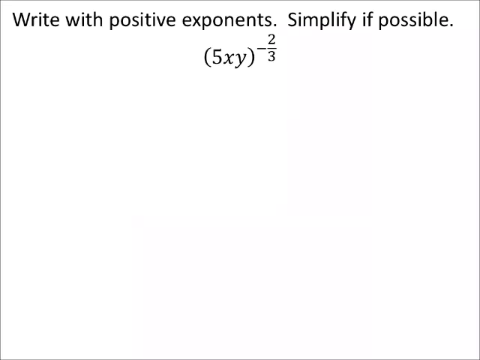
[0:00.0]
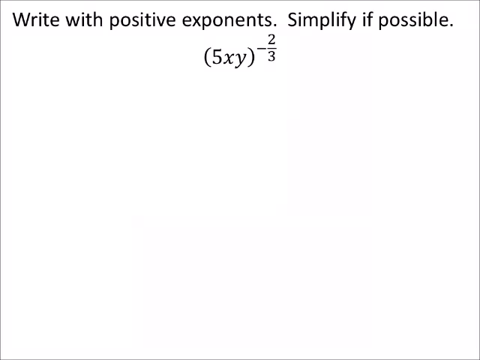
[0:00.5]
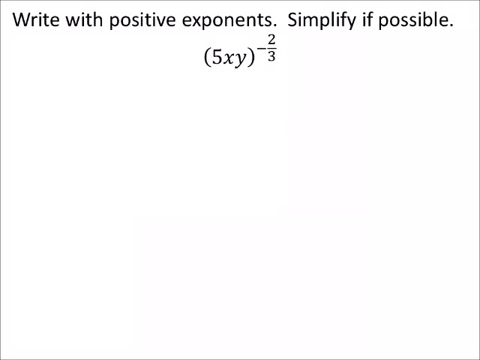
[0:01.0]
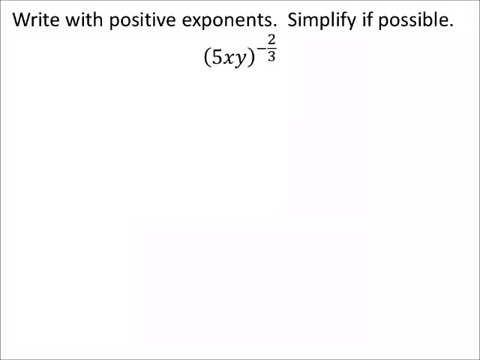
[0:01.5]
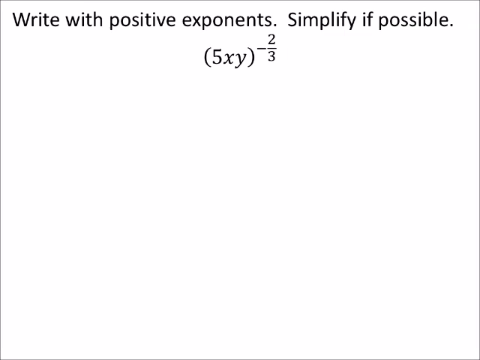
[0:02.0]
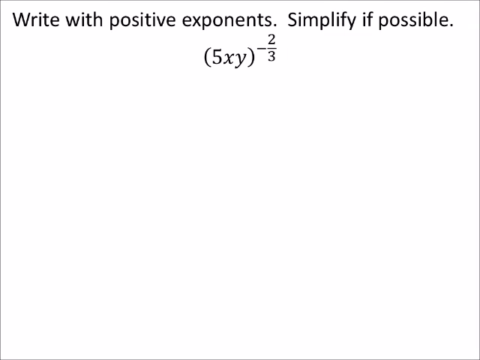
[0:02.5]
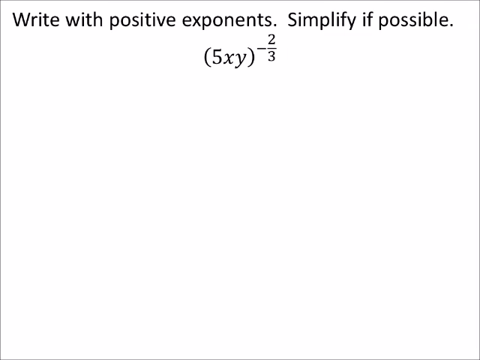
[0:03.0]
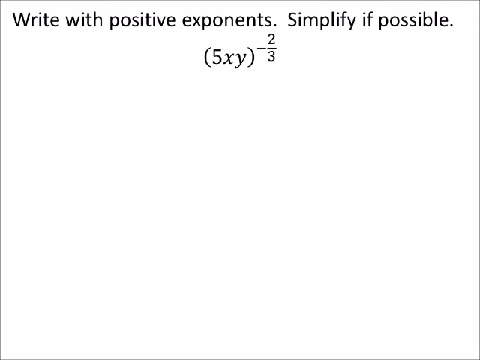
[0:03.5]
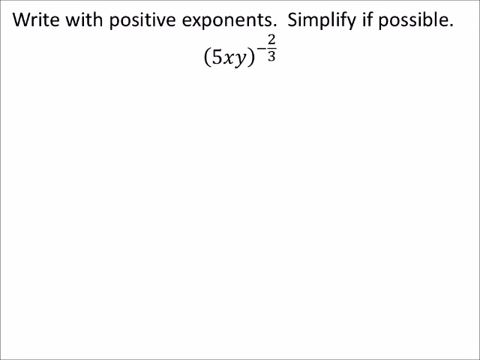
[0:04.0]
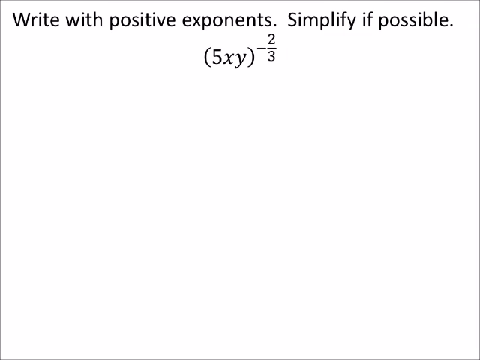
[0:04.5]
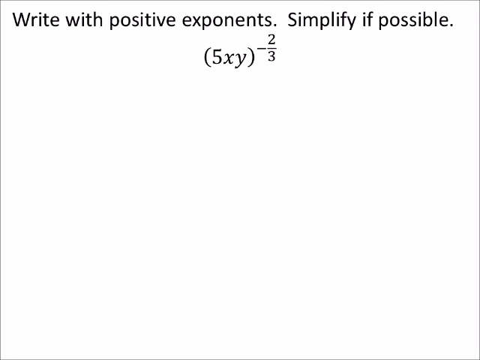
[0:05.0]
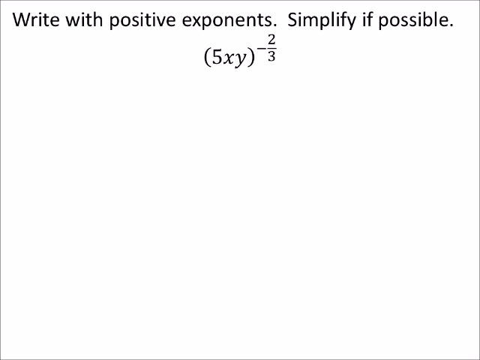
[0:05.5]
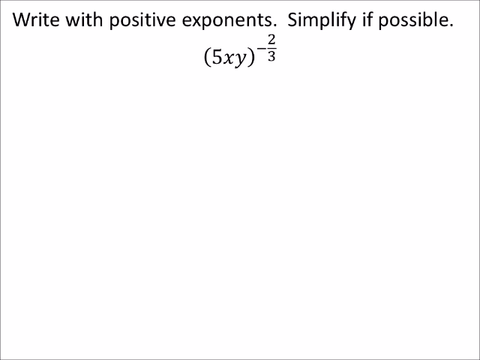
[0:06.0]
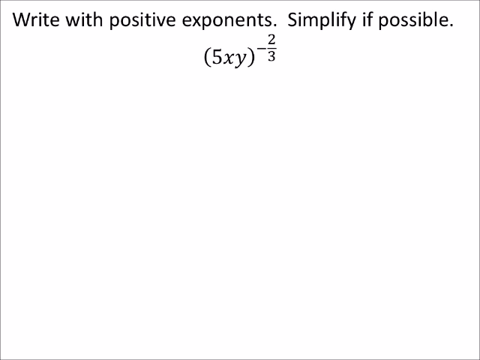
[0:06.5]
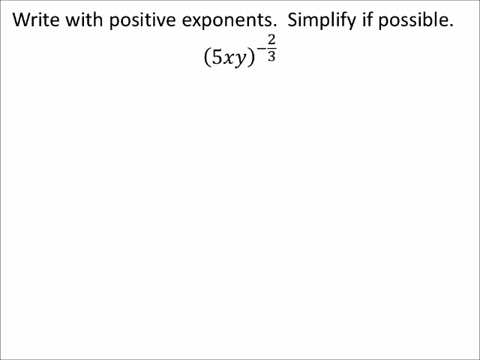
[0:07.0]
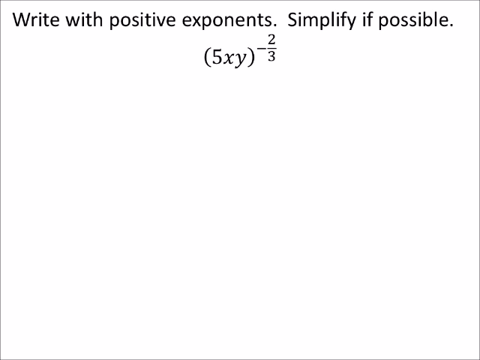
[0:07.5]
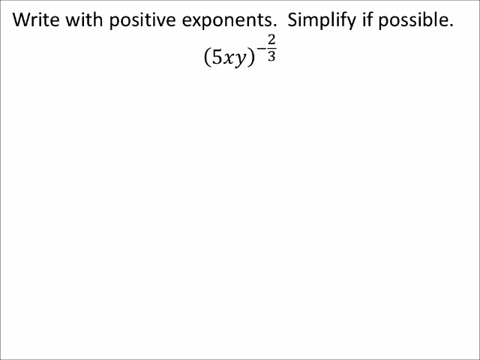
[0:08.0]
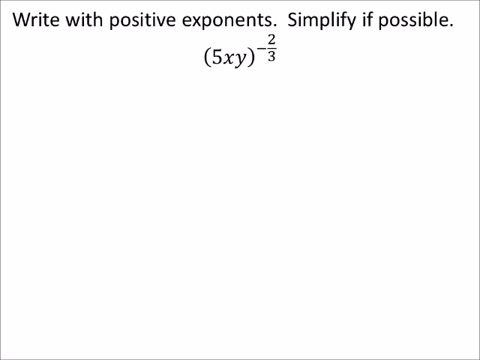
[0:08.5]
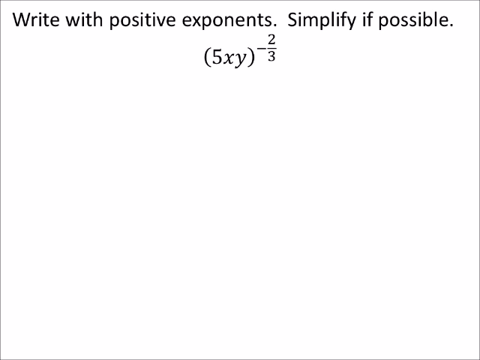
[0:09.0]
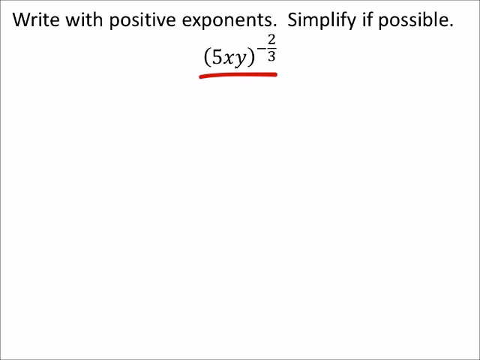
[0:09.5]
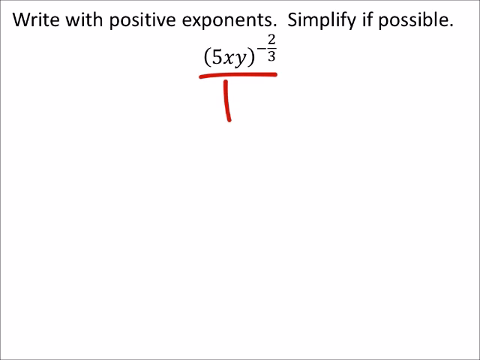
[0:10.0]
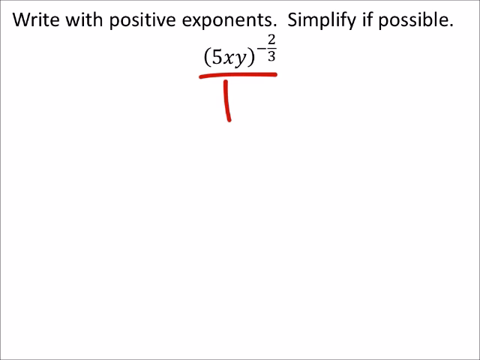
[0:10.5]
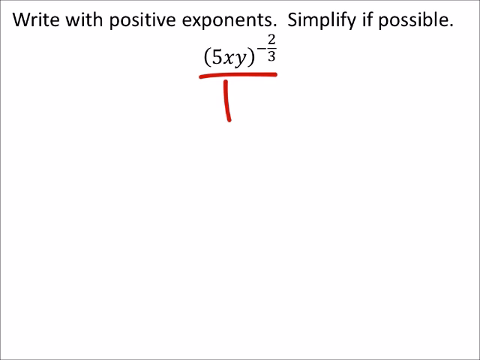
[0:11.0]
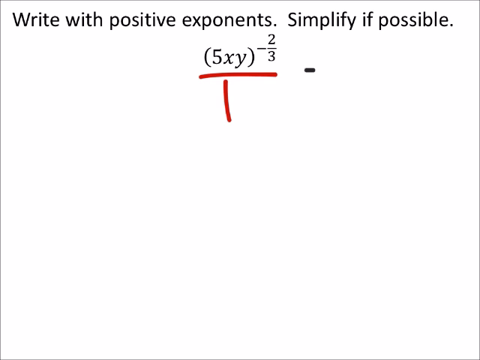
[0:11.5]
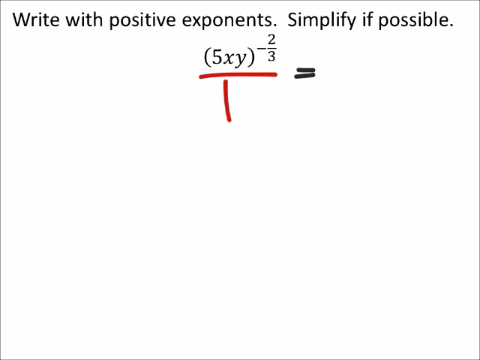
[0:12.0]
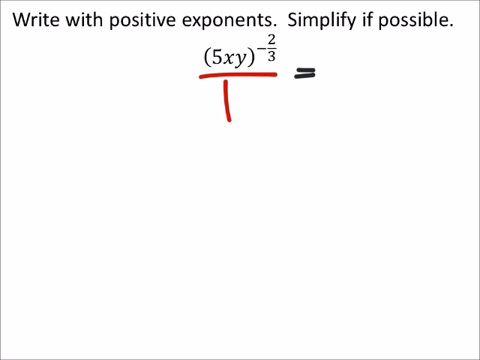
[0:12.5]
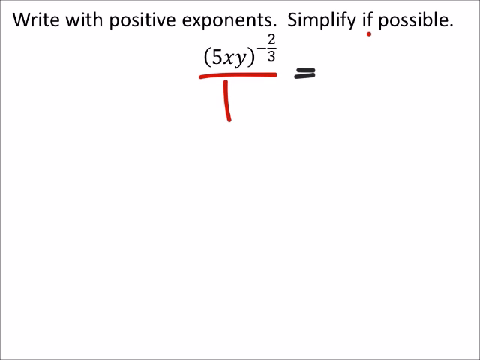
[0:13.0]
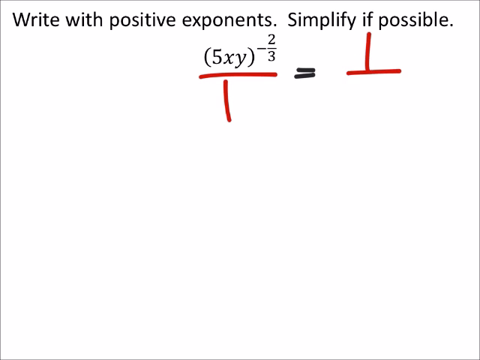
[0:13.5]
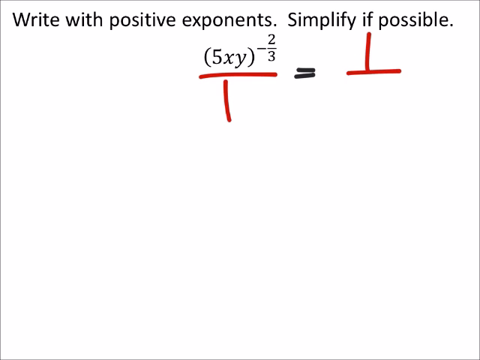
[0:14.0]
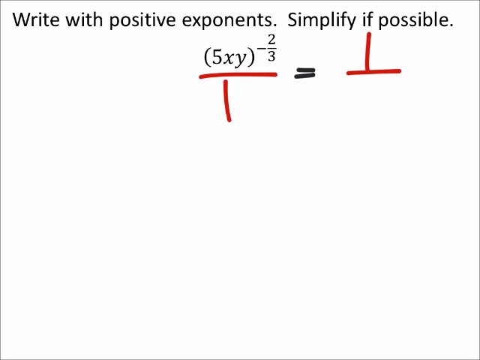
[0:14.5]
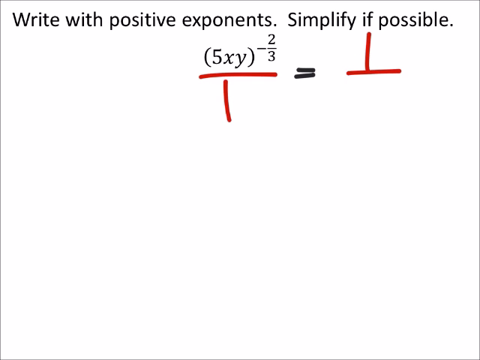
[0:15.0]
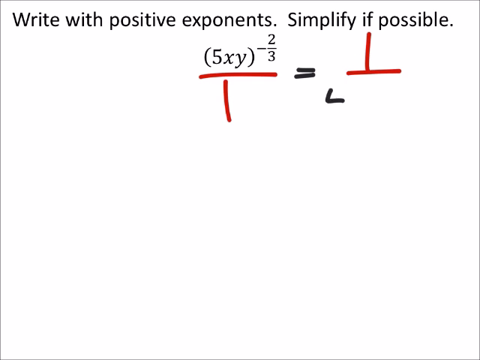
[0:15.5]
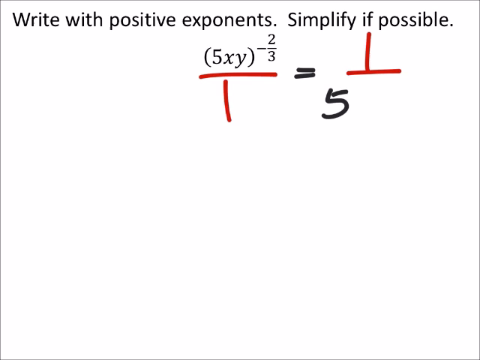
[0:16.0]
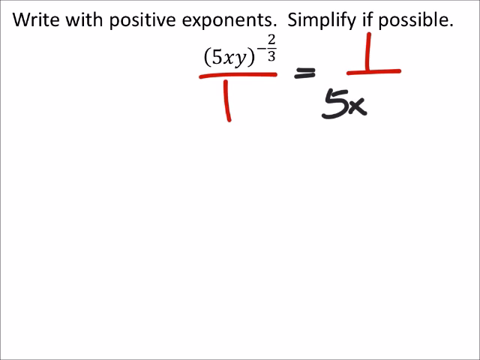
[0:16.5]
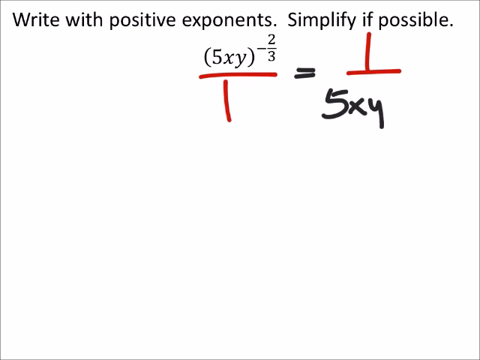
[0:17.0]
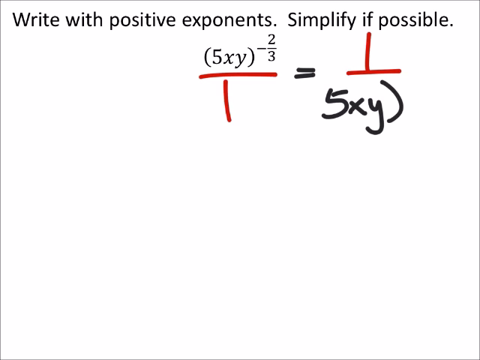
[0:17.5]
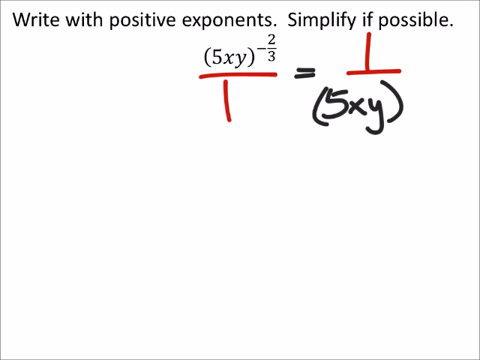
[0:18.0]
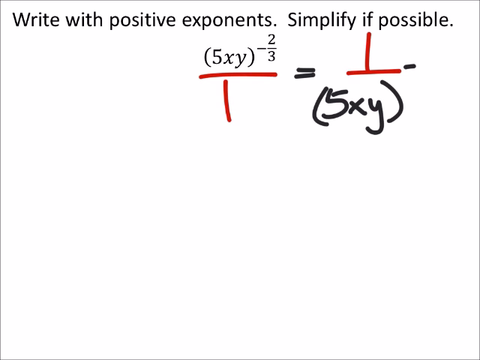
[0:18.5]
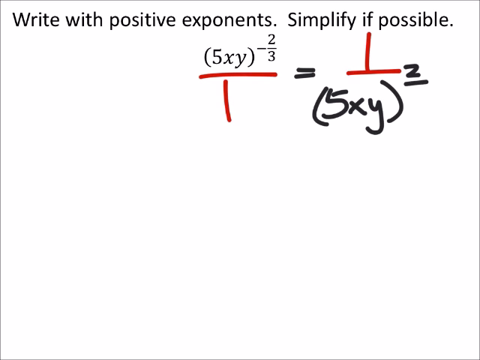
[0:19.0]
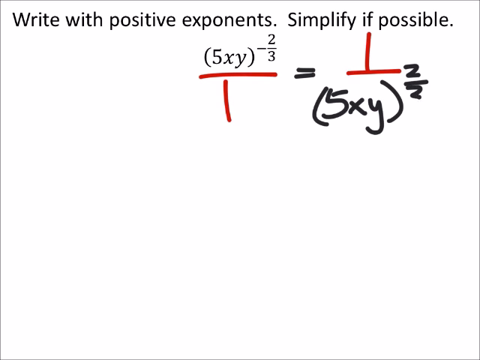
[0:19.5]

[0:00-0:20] A complex mathematical problem is shown: "write with positive exponents and simplify if possible" followed by the expression 5xy to the power minus two-thirds. The problem appears as bold black text at the top of a whiteboard-type screen, with the expression centralised below it. For the first part nothing happens, then ink line drawing appears on the screen. A red line goes under 5xy to the power minus 2 over 3, and a 1 is written beneath it. Then, in black, an equals sign is written to the right of the expression. Finally, 1 over 5xy to the power two-thirds is written, rewriting the original expression as an equal expression without the negative power by turning it upside down.